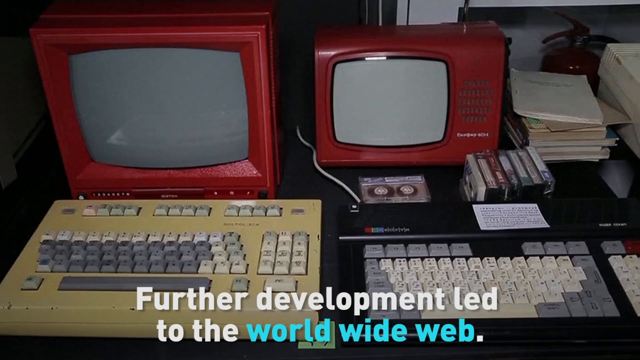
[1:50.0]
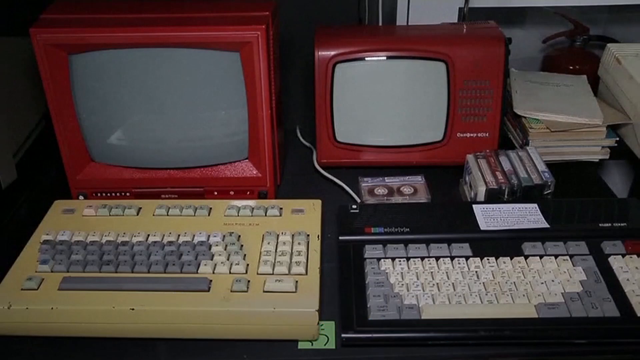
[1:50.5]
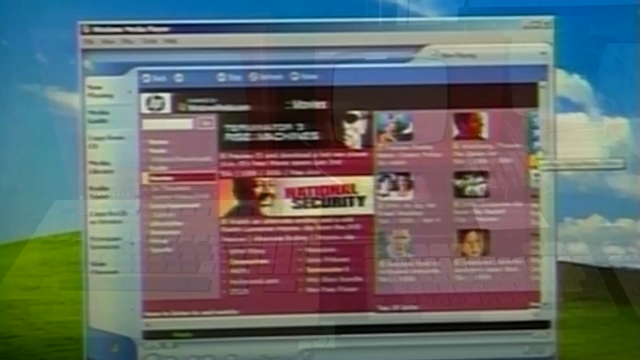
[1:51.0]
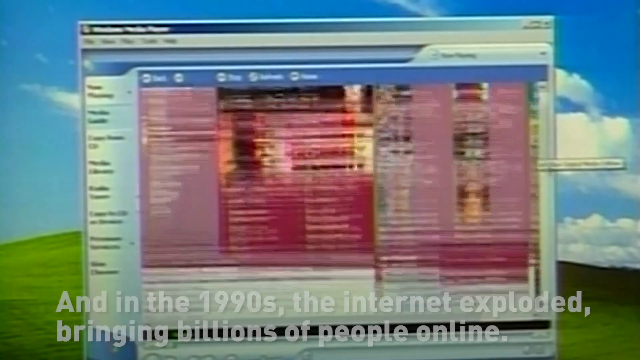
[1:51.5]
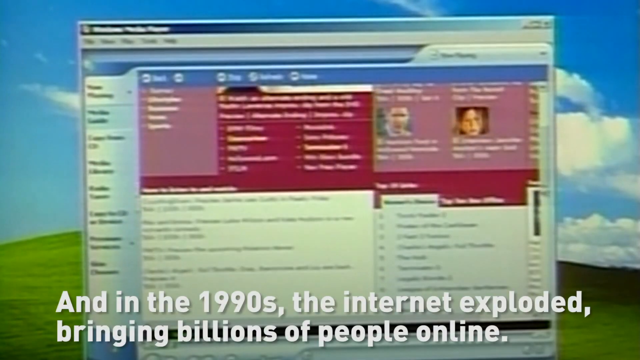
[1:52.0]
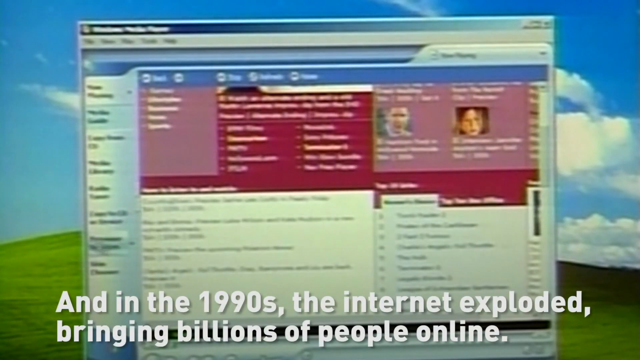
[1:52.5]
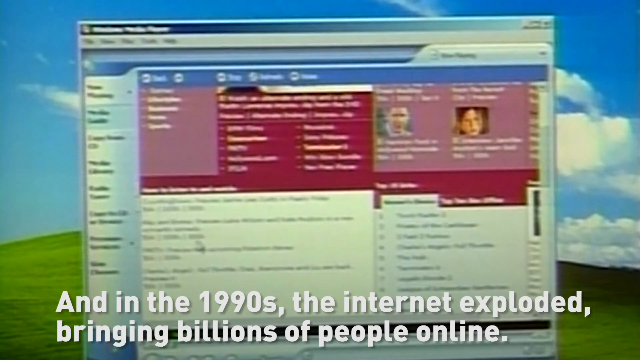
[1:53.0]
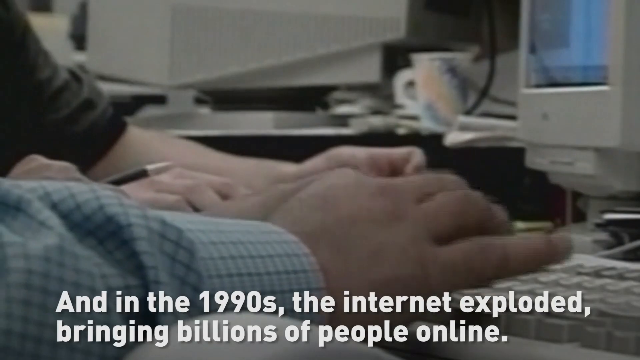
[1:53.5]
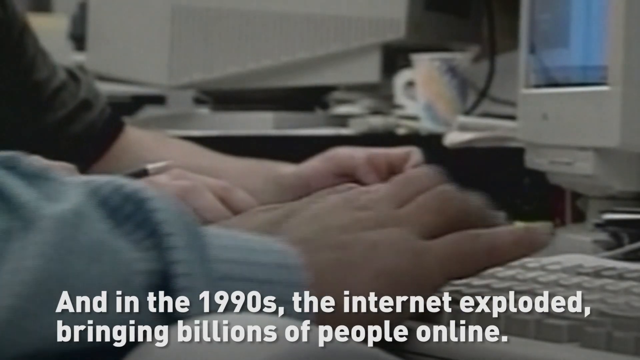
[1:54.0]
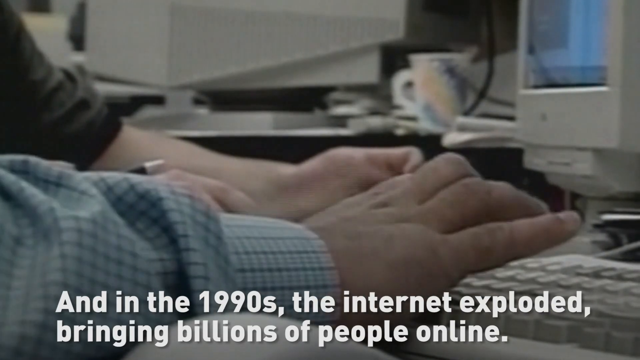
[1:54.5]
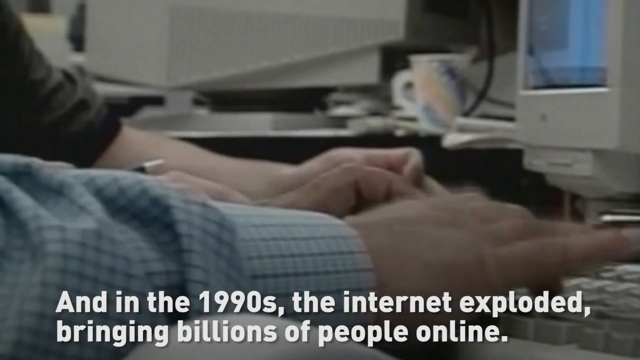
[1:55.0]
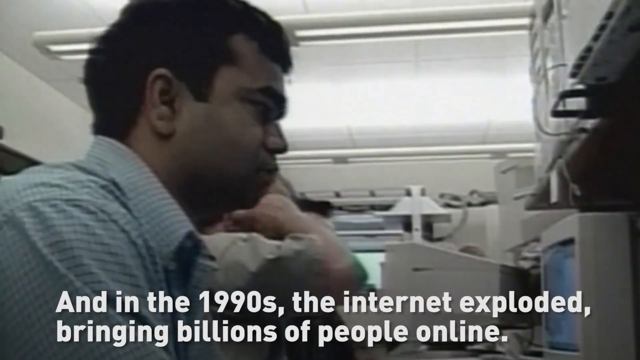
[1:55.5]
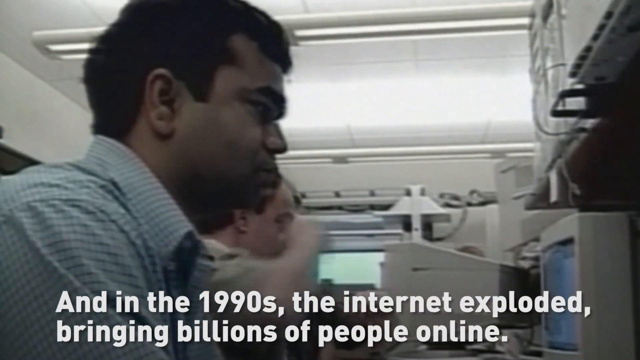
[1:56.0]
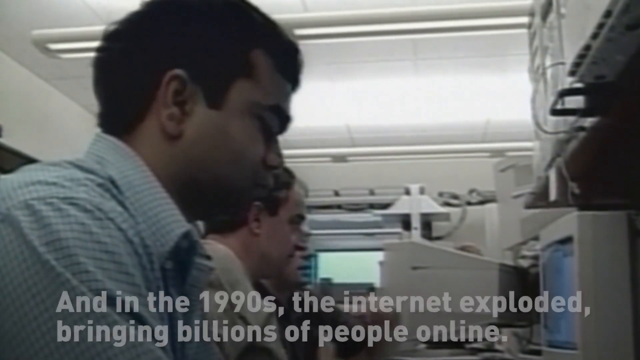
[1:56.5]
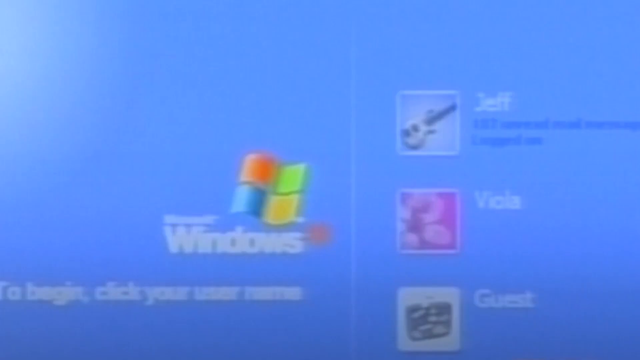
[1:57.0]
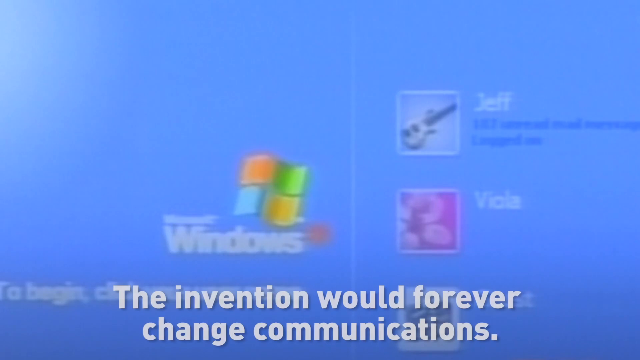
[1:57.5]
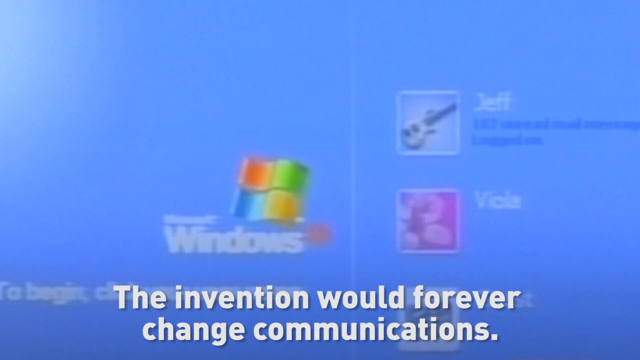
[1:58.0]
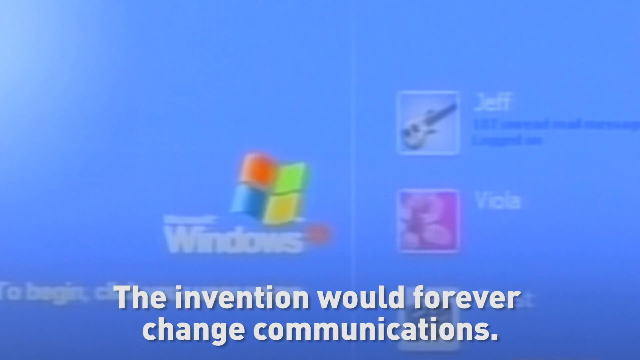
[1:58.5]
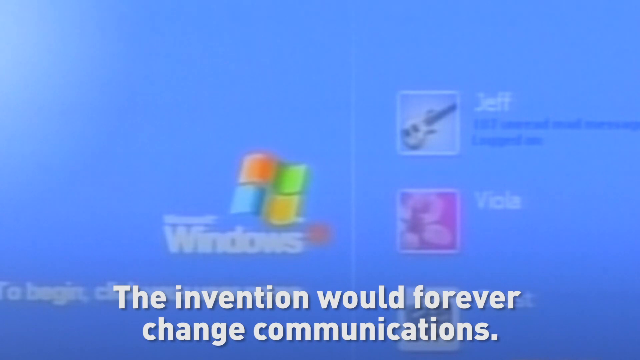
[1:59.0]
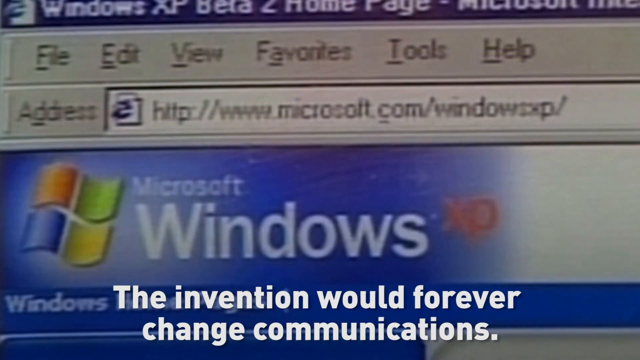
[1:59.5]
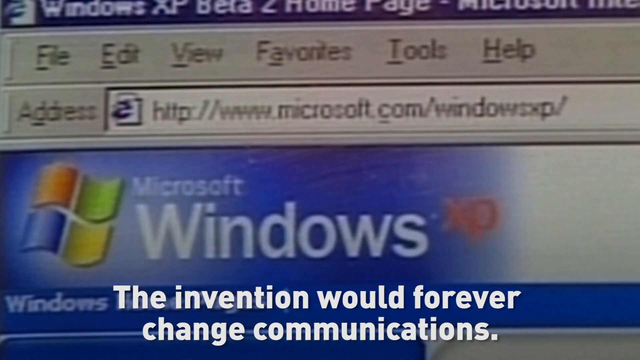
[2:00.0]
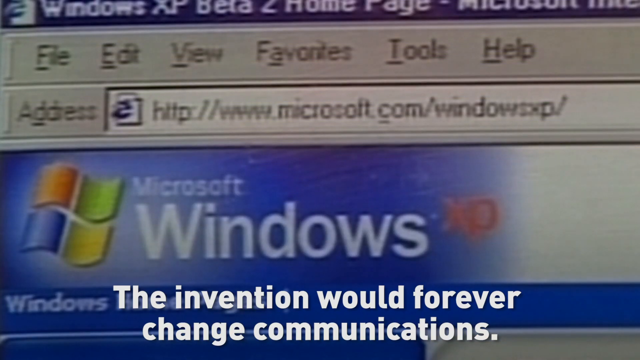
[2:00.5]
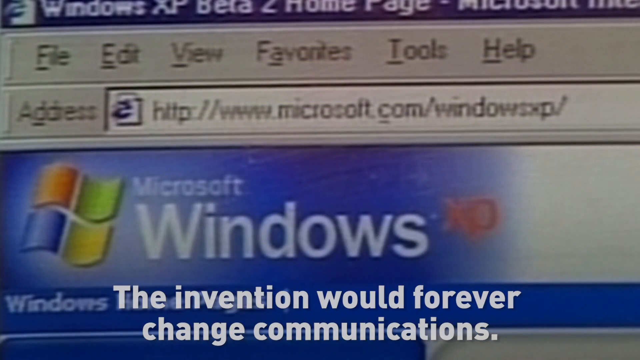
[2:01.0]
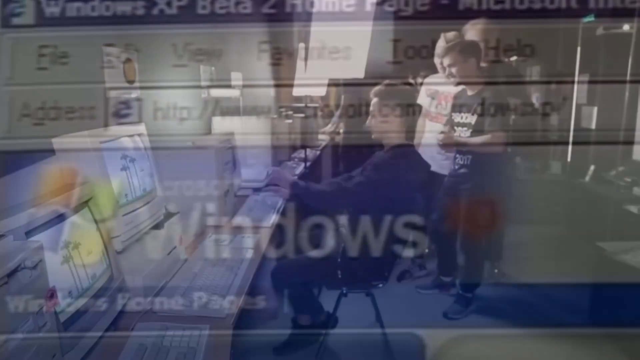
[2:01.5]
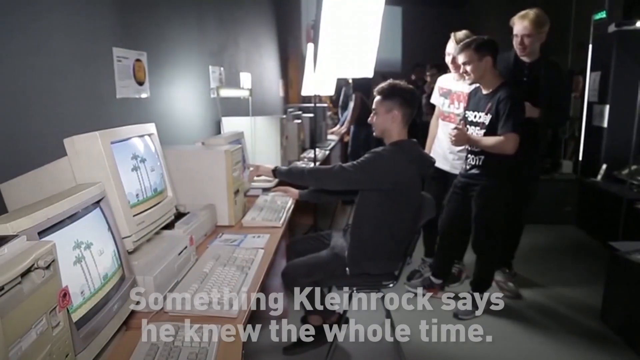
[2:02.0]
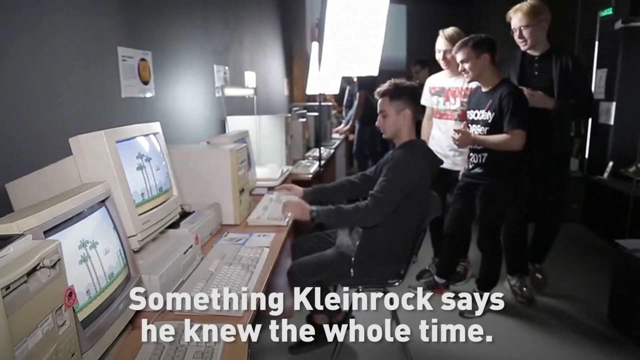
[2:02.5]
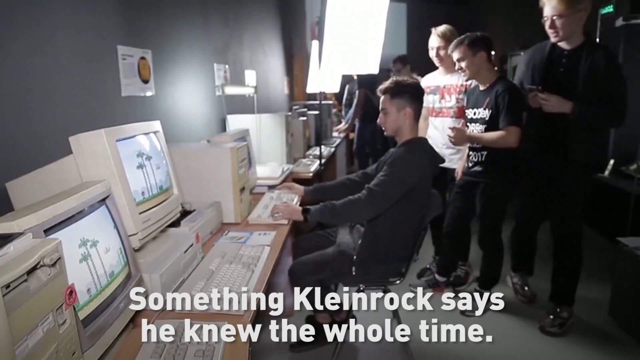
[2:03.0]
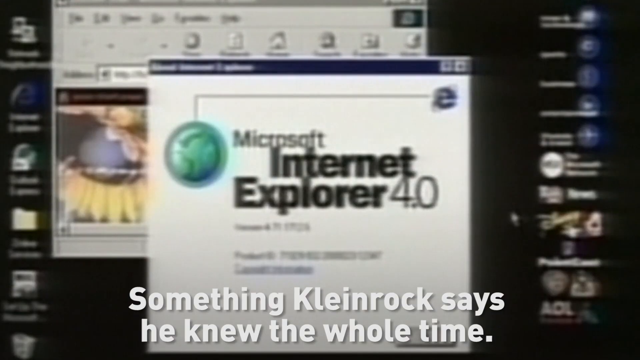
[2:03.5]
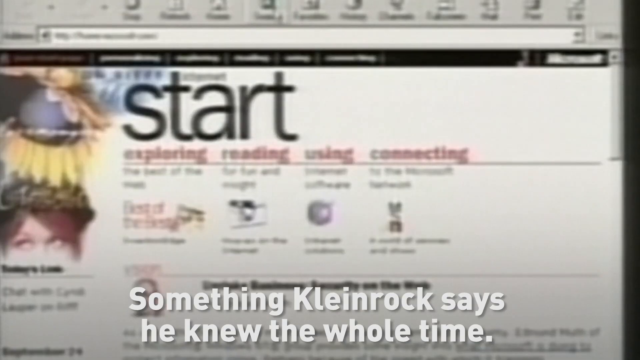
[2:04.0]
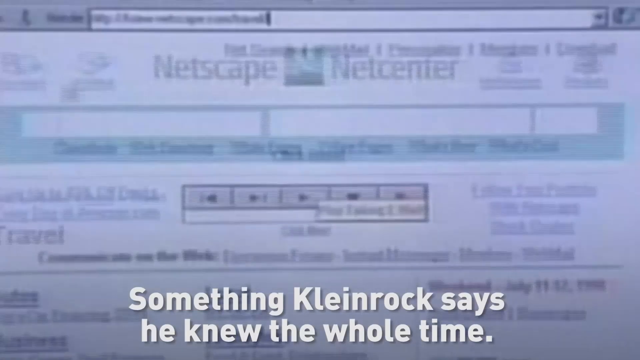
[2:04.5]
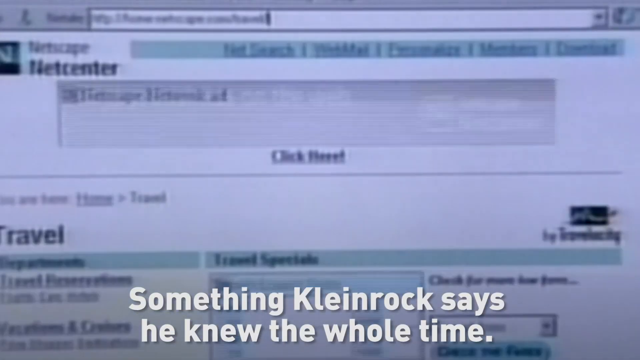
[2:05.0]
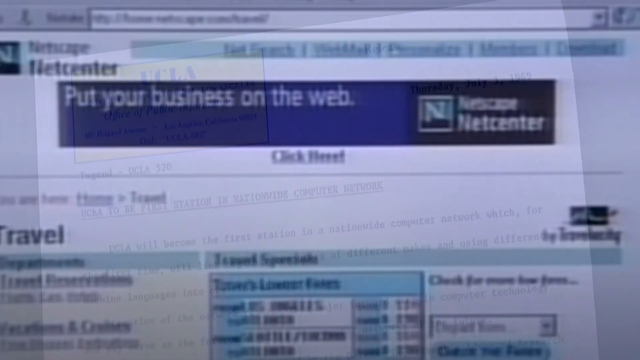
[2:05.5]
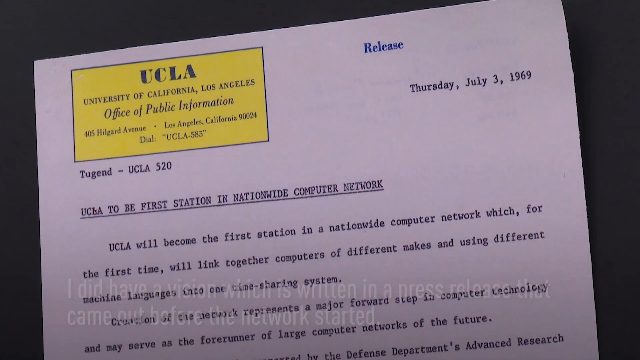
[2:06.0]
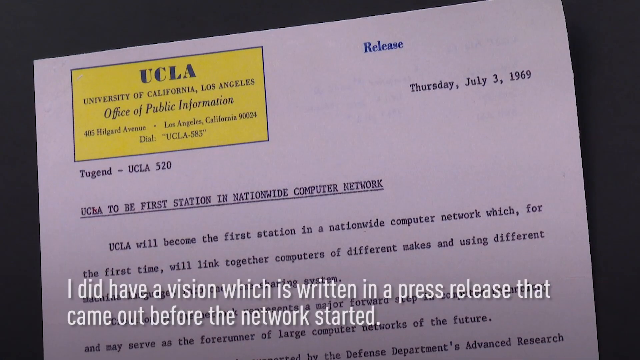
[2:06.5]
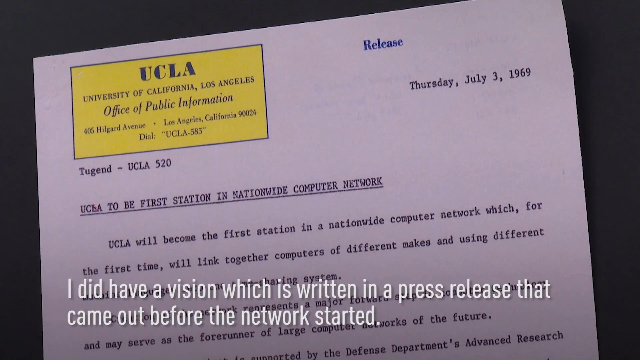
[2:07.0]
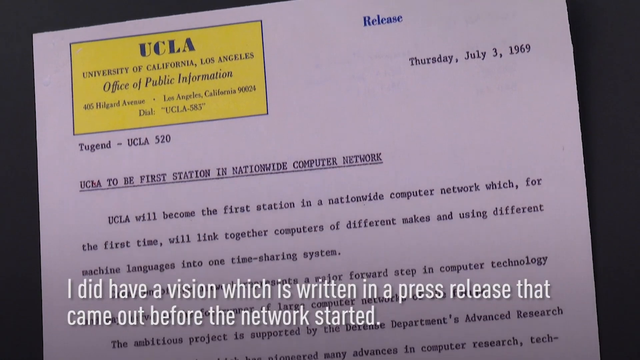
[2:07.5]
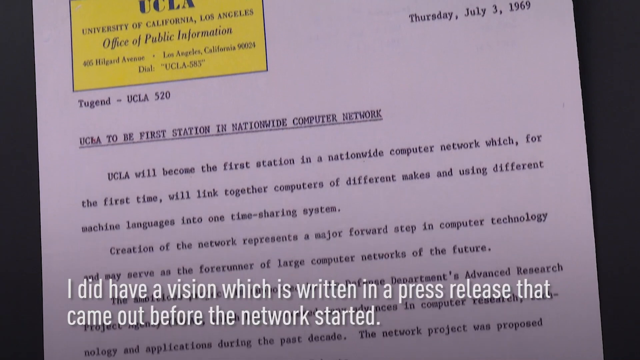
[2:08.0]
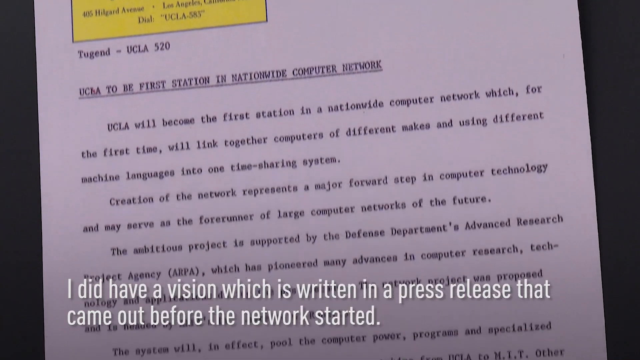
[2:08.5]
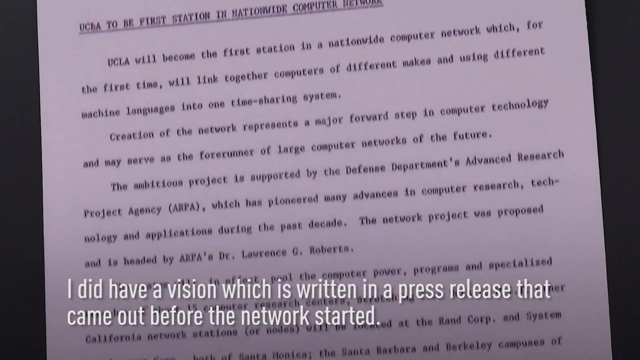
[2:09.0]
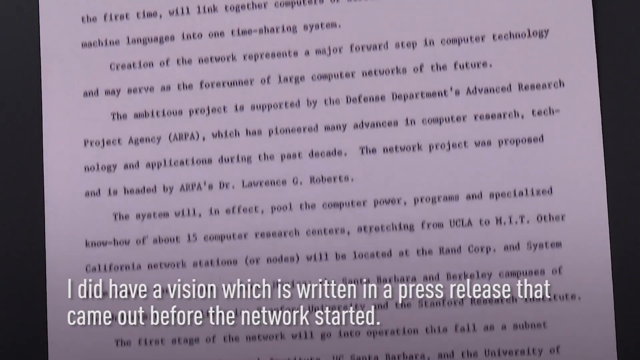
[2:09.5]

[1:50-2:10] A close-up shows two old-style, prototypical computers sitting on a desk, with red monitors that look like small televisions and a keyboard in front of each. The keyboard on the left is yellow and the one on the right is black, both with gray and white keys. A stack of books is piled next to the computer on the right, and what look like cassette tapes are lined up between the keyboard and the monitor on the right. Text at the bottom reads, "Further development led to the World Wide Web." Then a caption reads, "And in the 1990s, the Internet exploded, bringing billions of people online," with a blurry computer screen behind it showing what looks like someone searching for something on the Internet. A close-up shows someone's hands pressing keys on a computer keyboard, with someone else's hands resting on a desk behind them, along with items on a desk including a mug and some papers. Next comes a close-up of the face of the person working on the computer, with two other people behind him. The screen changes to what looks like a Windows login screen, with the caption "The invention would forever change communications." Then what looks like a group of young people stands in front of a wall of computers, one of them working on the keyboard, as the caption reads, "Something Kleinrock says he knew the whole time."